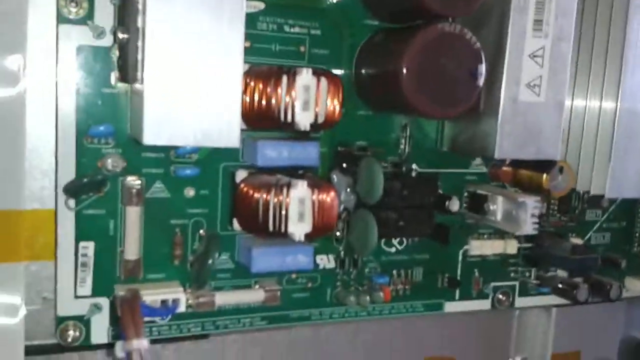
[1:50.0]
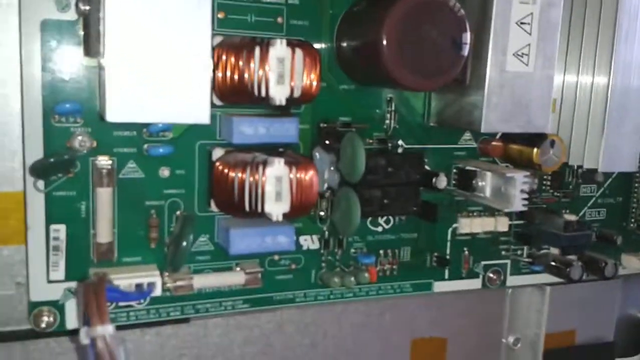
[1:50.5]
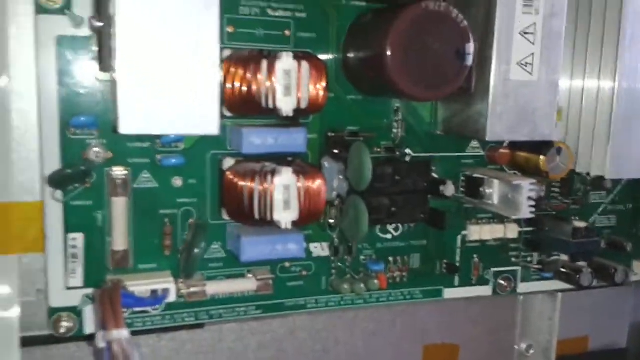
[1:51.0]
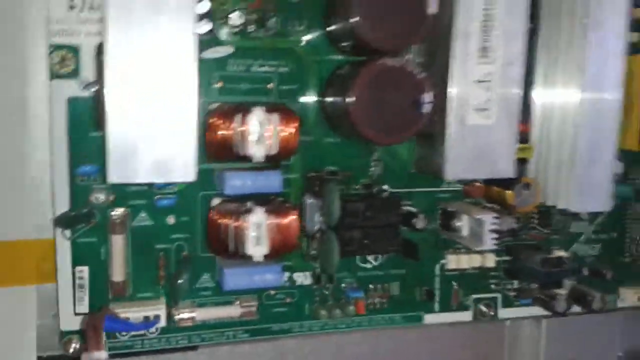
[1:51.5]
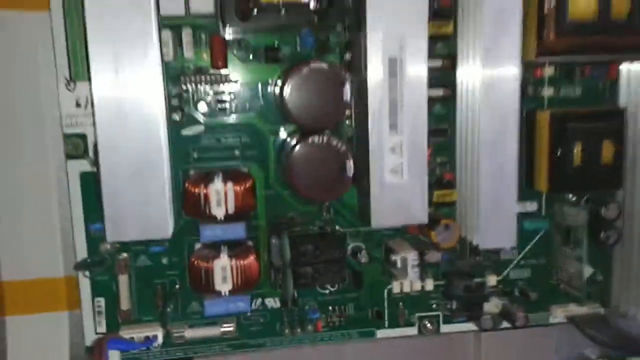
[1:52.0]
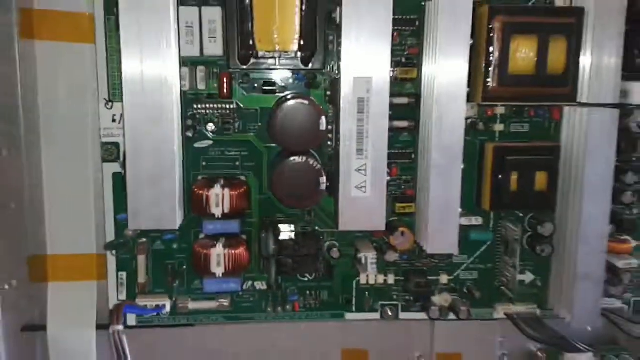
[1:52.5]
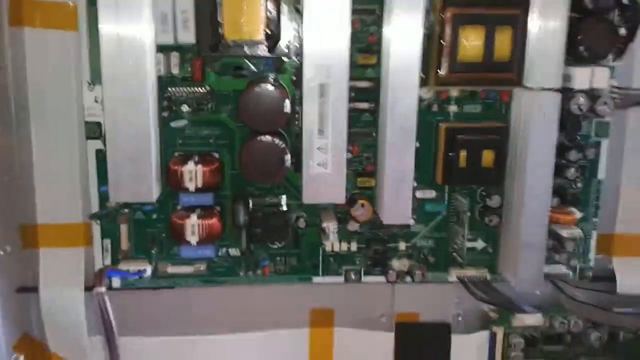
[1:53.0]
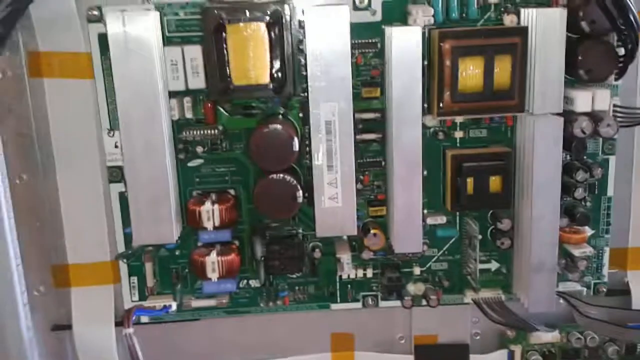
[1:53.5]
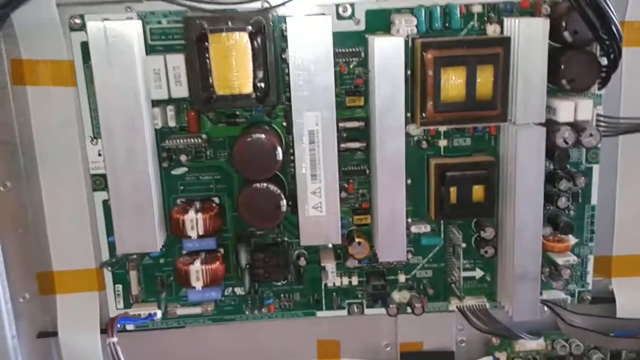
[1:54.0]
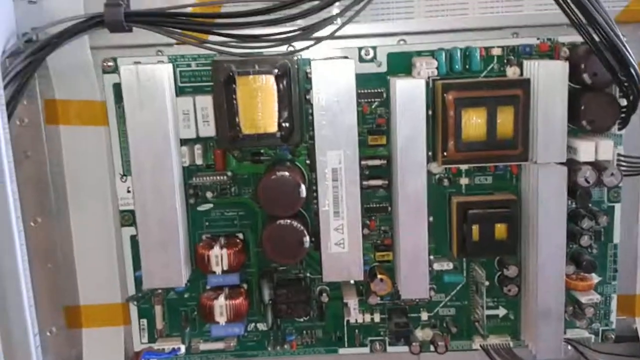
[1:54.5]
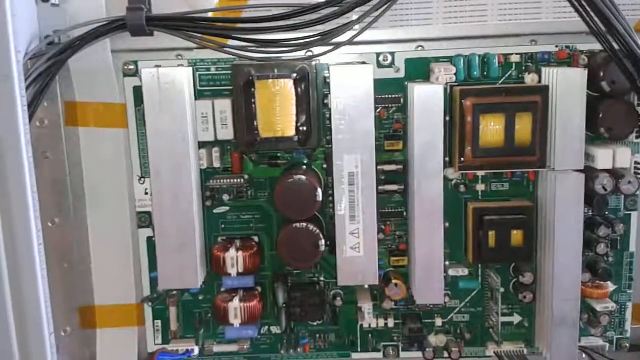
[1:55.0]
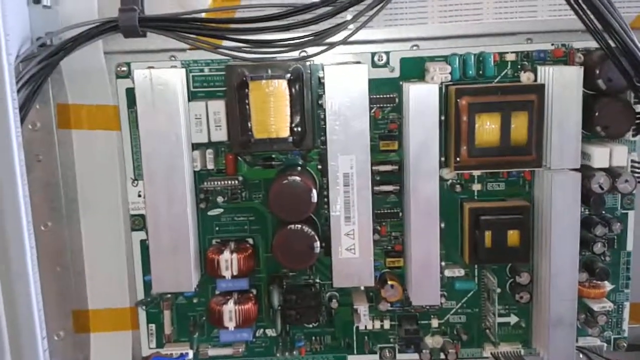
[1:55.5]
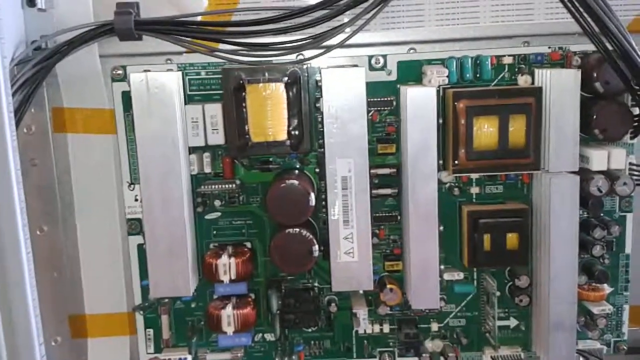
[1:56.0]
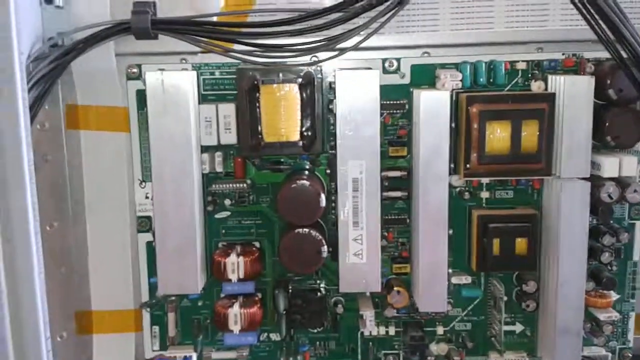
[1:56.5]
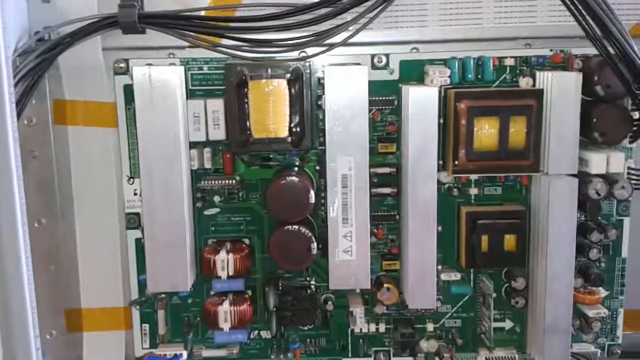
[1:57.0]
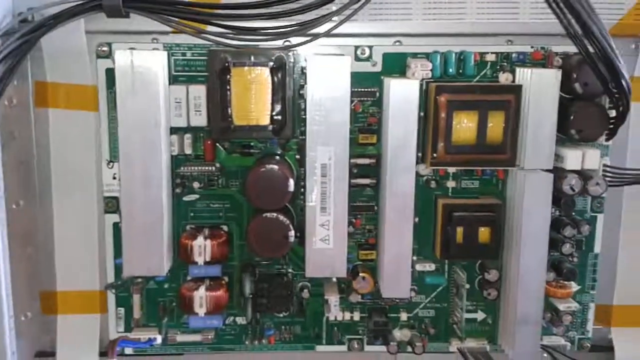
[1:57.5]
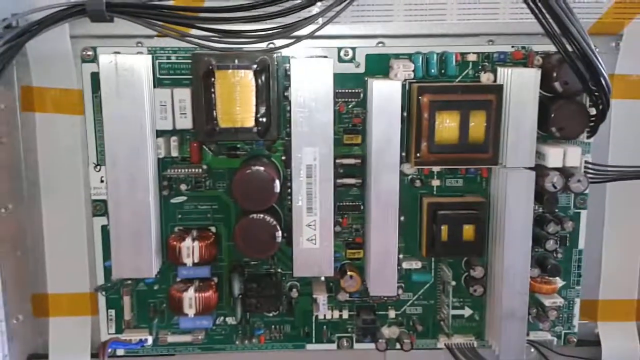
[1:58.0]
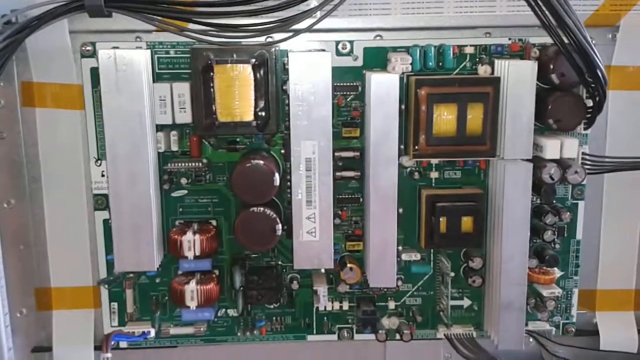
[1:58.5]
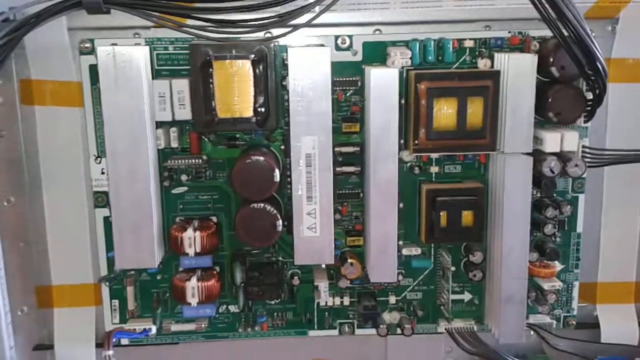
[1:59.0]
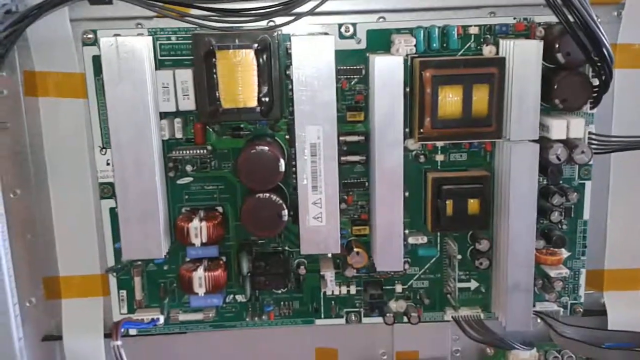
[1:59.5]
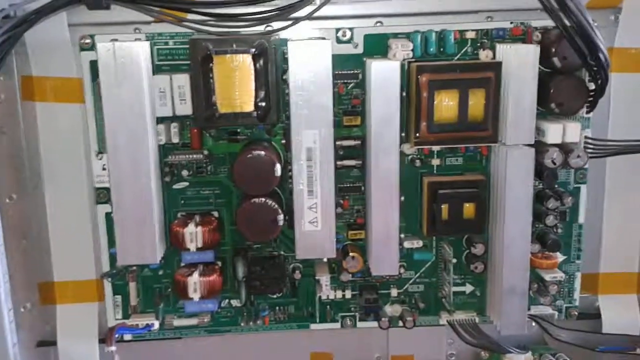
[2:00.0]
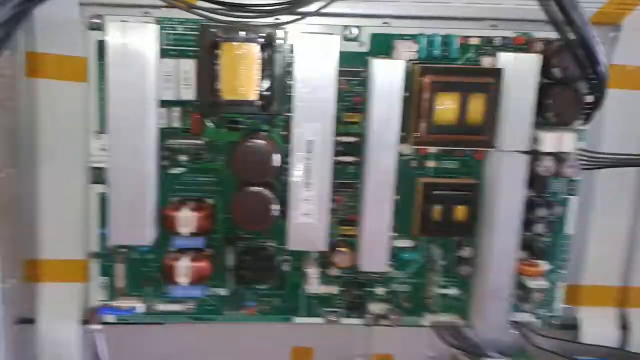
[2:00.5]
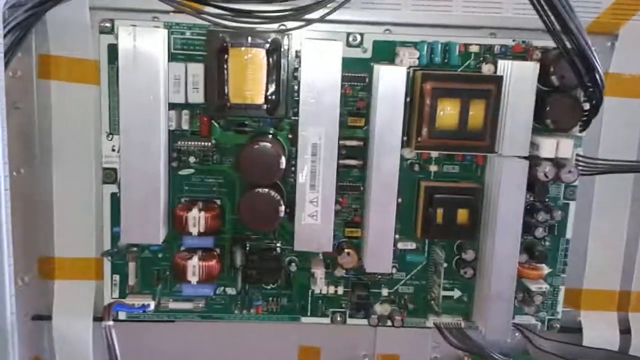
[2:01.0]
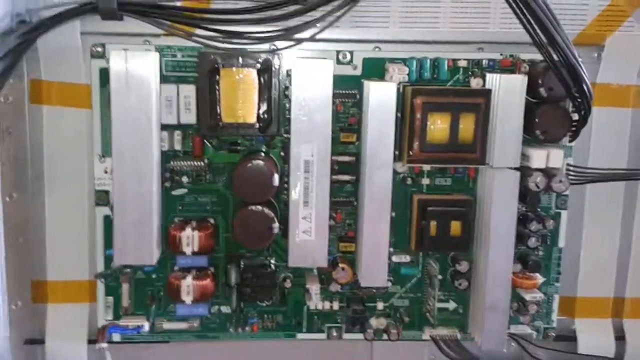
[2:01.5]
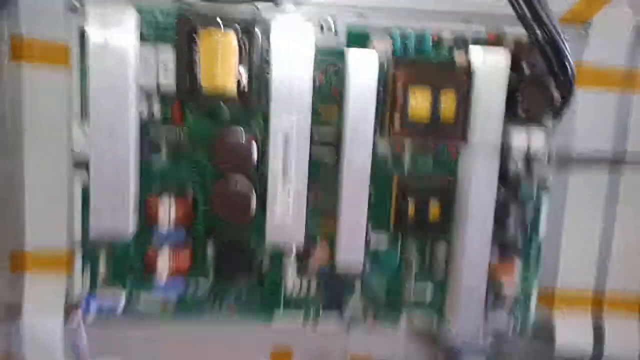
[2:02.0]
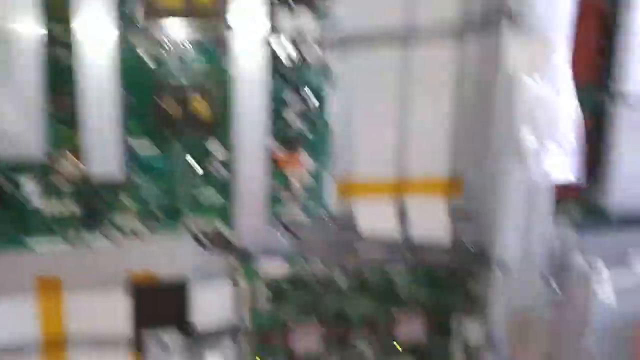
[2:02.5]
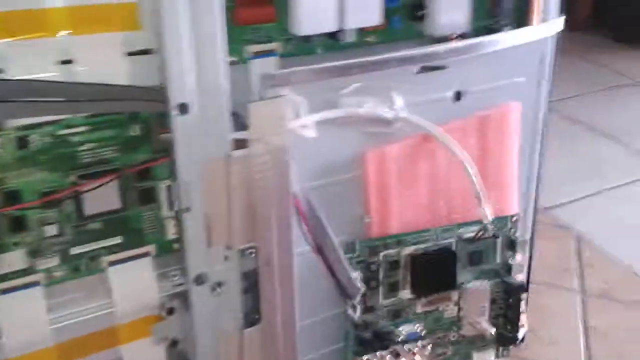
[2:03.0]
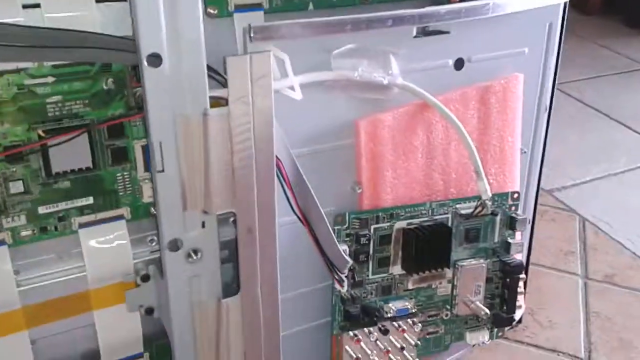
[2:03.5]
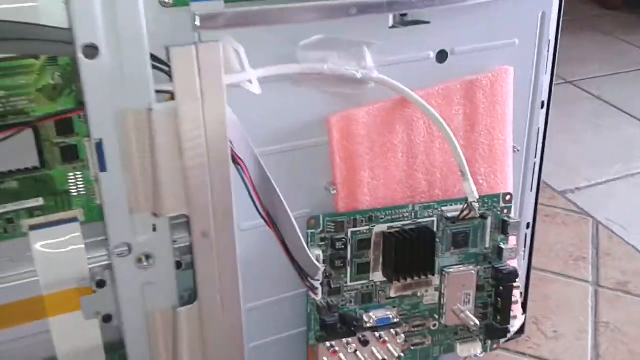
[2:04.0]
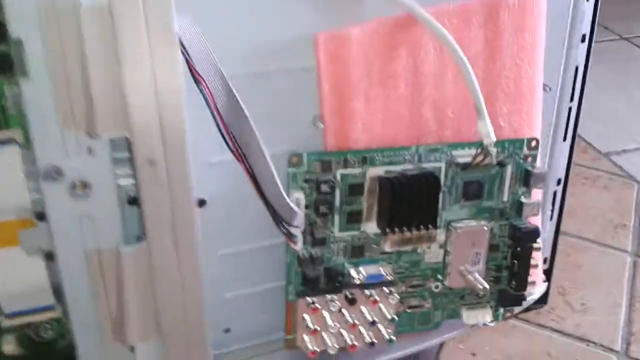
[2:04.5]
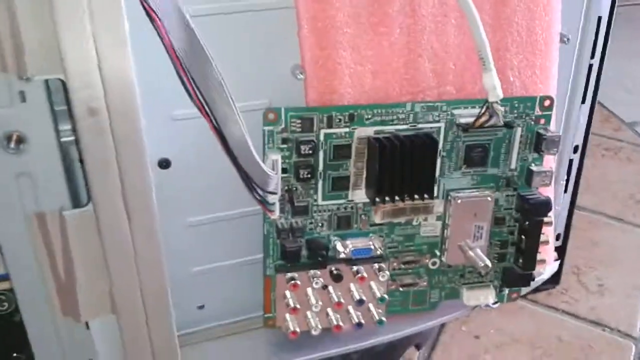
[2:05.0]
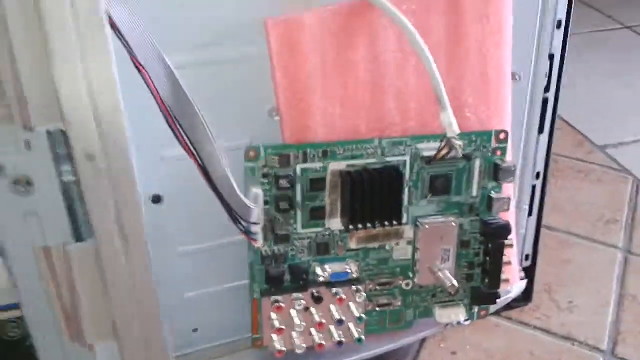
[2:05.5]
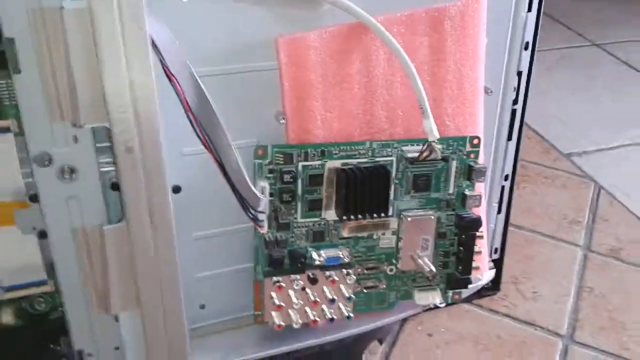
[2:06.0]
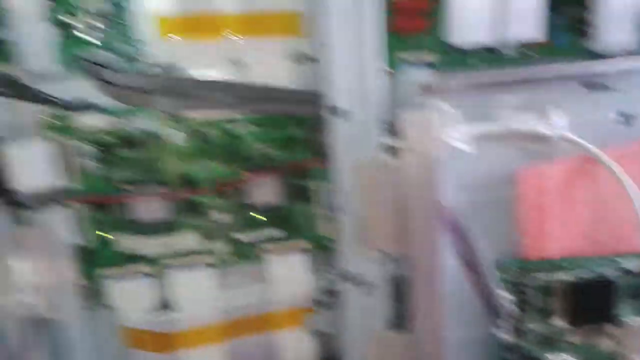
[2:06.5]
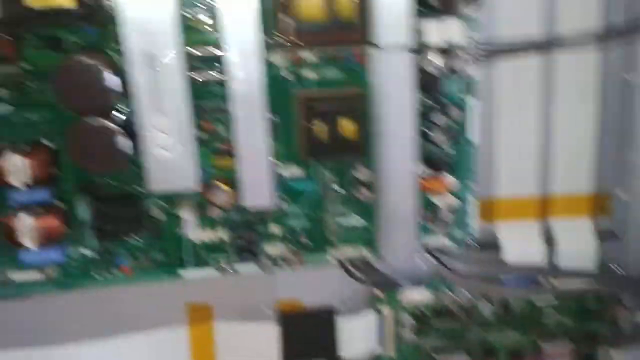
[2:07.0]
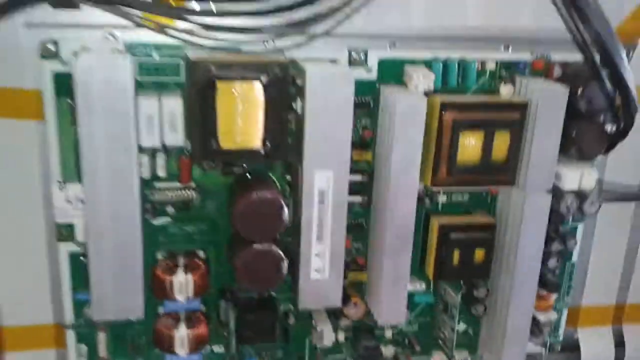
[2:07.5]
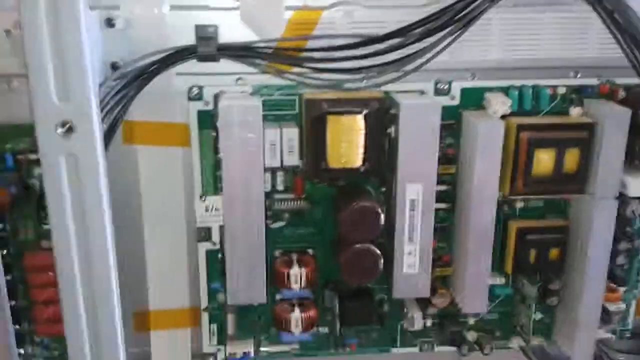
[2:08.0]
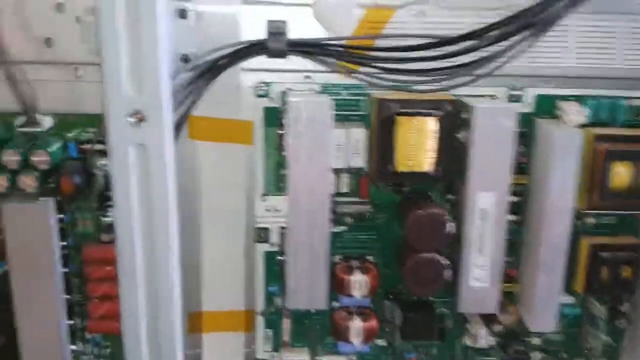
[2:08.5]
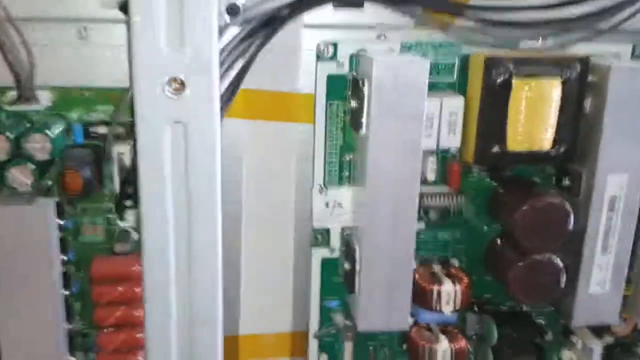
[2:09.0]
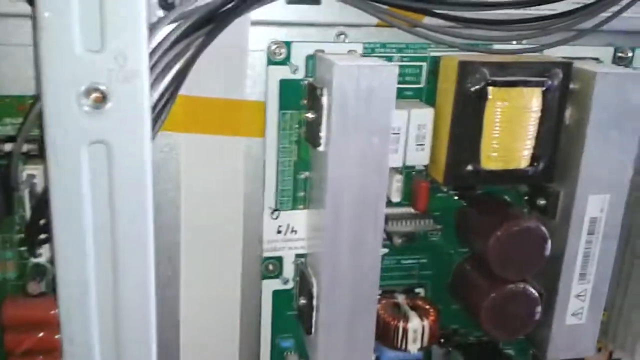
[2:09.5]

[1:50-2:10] The inside of a flat screen TV is shown, with its circuitry and circuit boards. He does a close-up of two white round inductors, each wrapped with copper wiring. Some resistors, small diodes of different colors, a few capacitors, an integrated circuit, transistors and relay switches are also visible. He then zooms out to show the whole circuit board, made up of a thousand pieces. Black and gray wiring comes out of the top right corner of the board, goes above it and is clipped above it so it doesn't get down on the circuit board, running along the top to the left side of the board.